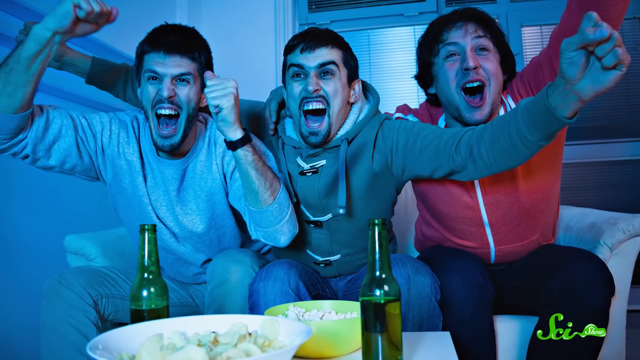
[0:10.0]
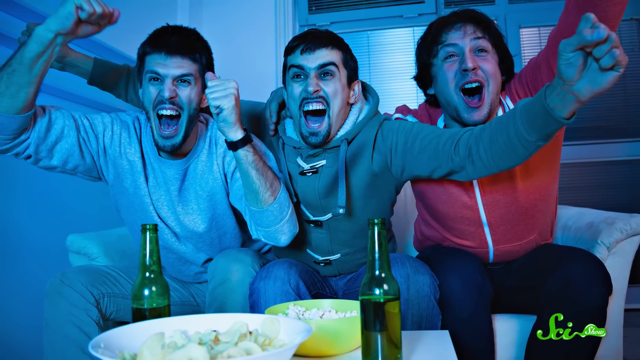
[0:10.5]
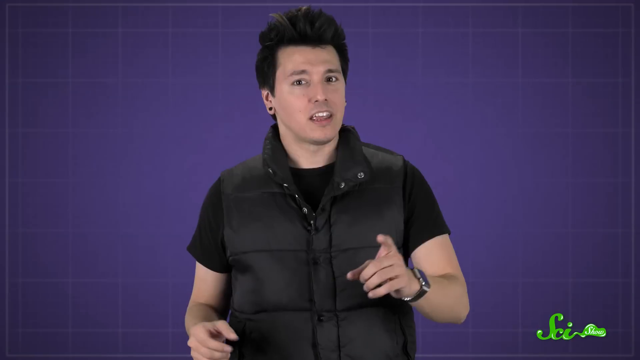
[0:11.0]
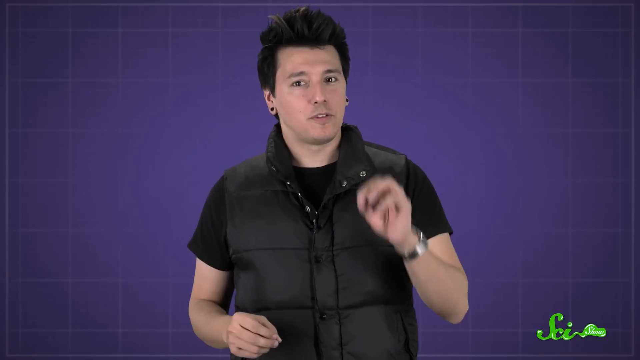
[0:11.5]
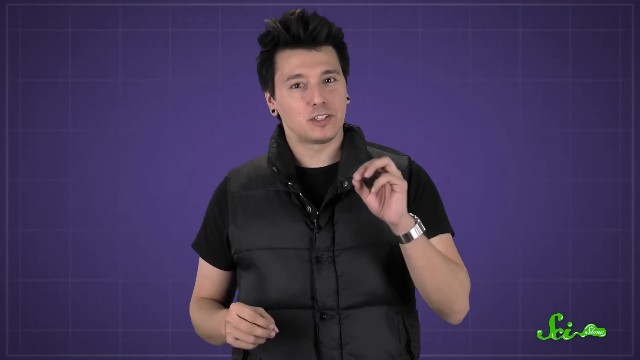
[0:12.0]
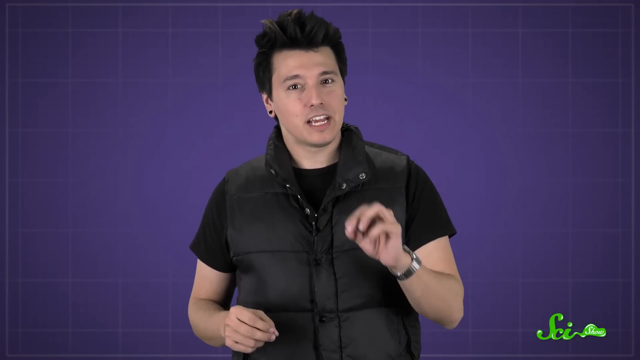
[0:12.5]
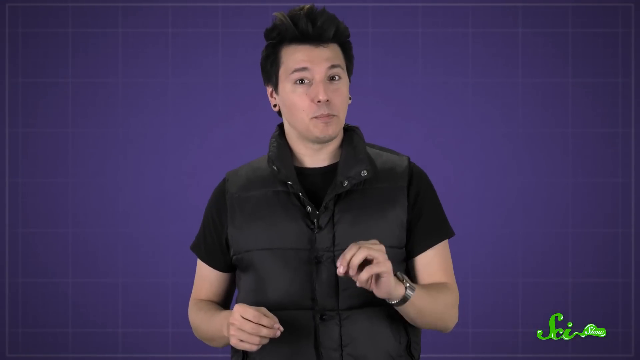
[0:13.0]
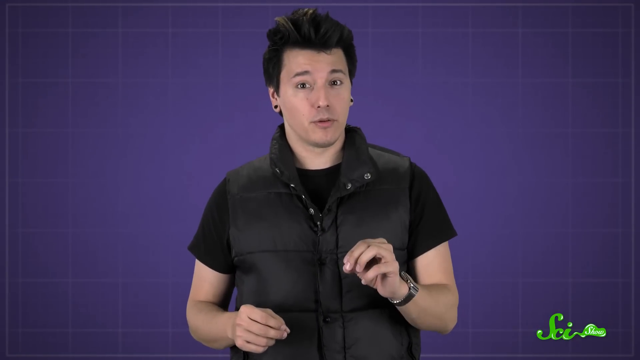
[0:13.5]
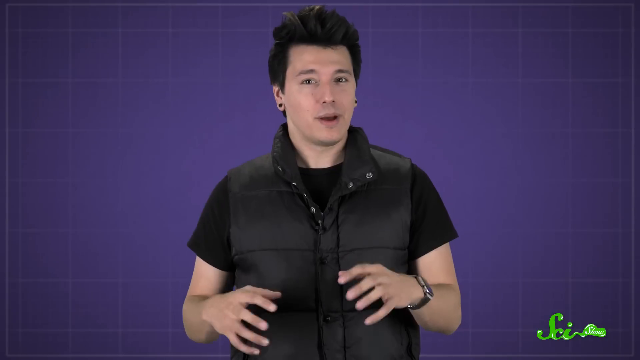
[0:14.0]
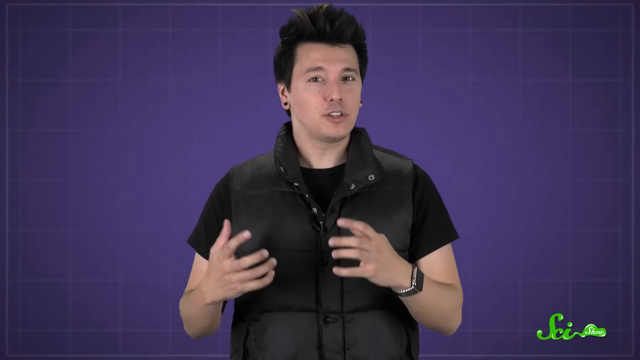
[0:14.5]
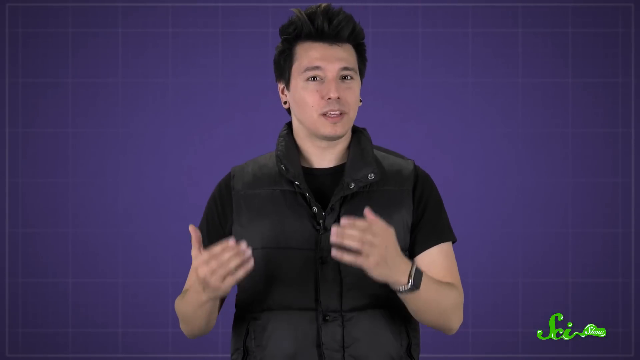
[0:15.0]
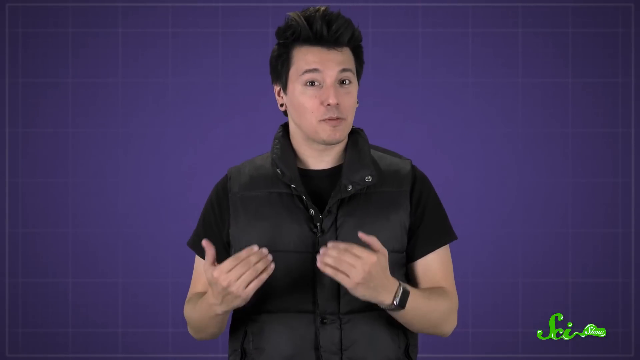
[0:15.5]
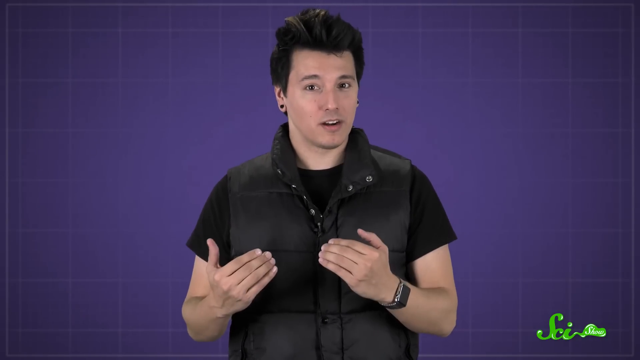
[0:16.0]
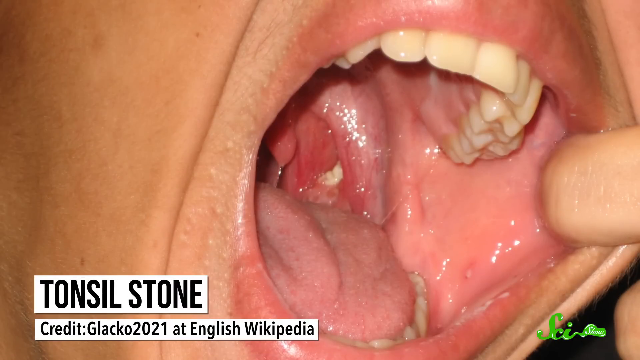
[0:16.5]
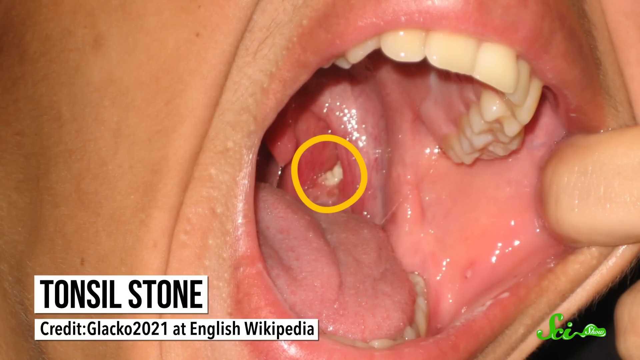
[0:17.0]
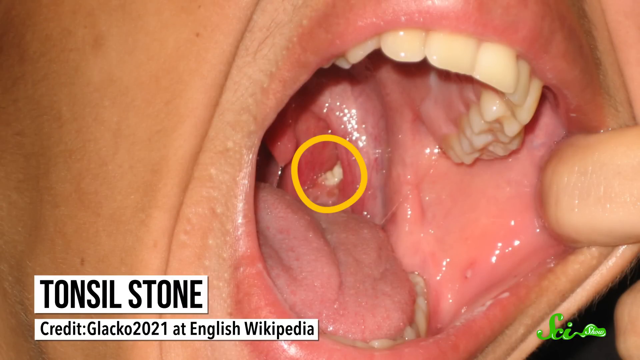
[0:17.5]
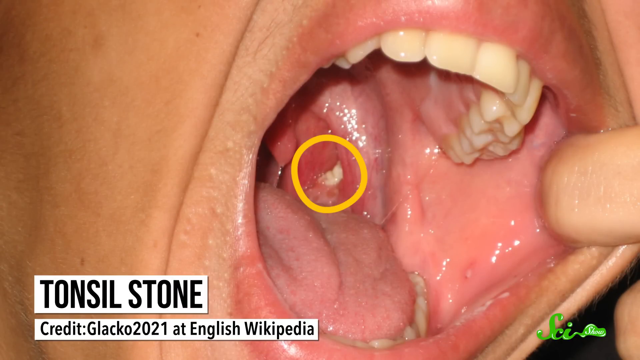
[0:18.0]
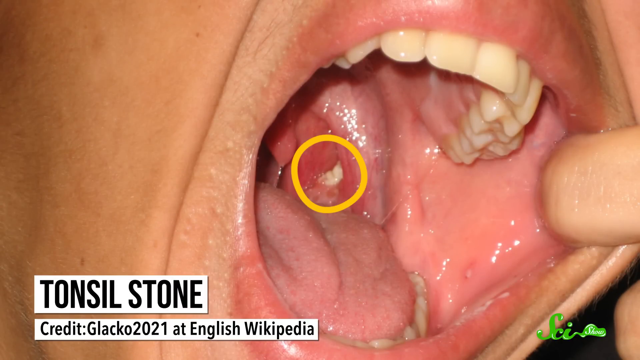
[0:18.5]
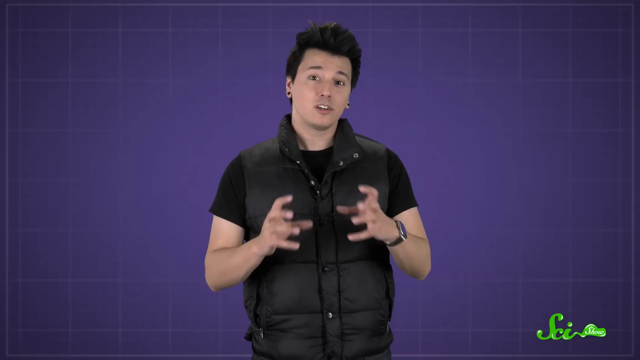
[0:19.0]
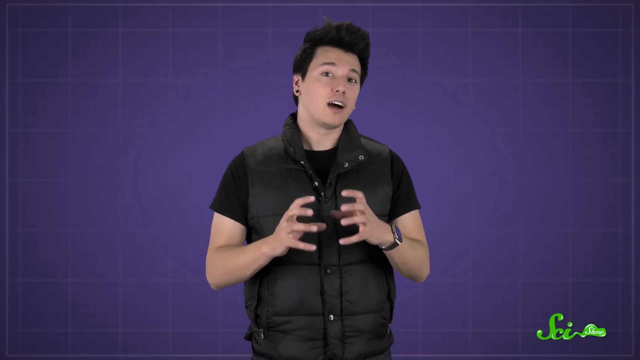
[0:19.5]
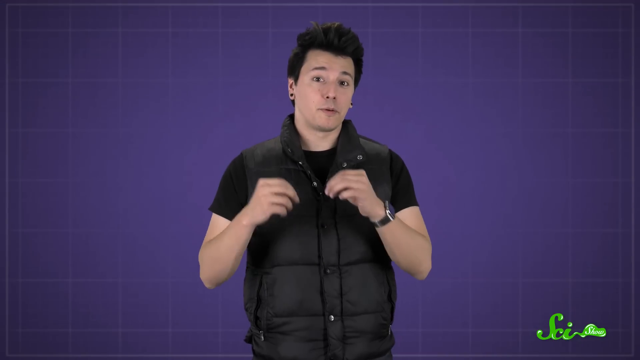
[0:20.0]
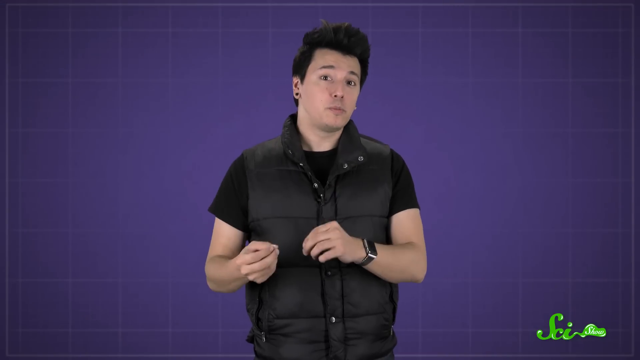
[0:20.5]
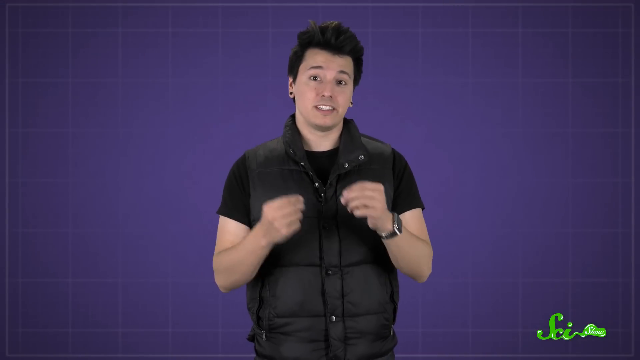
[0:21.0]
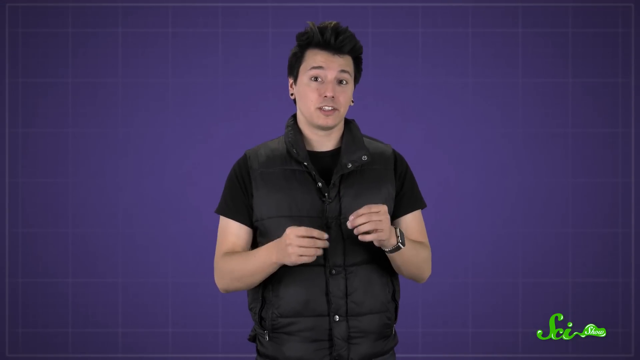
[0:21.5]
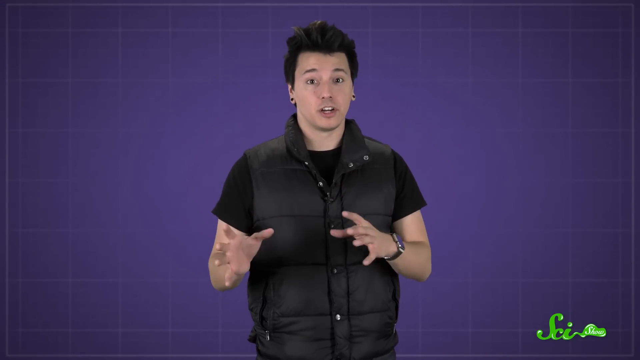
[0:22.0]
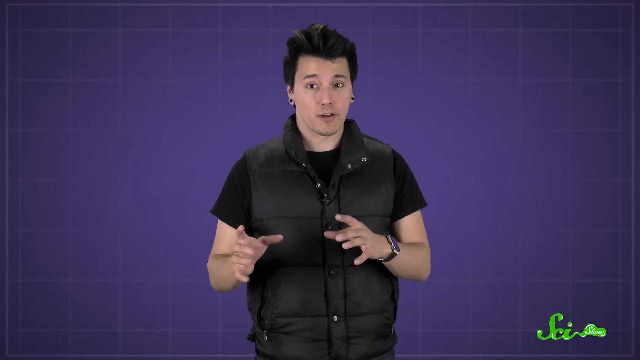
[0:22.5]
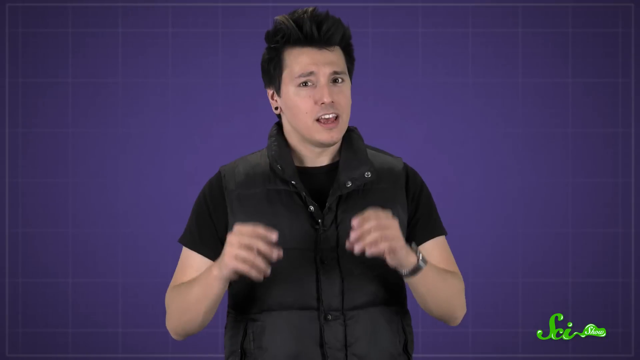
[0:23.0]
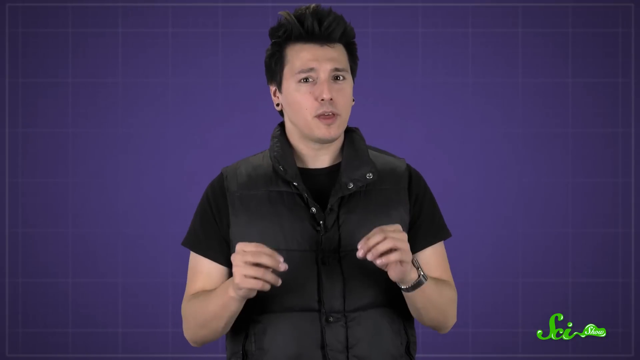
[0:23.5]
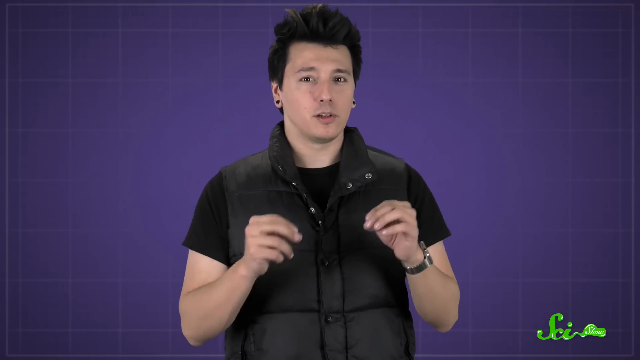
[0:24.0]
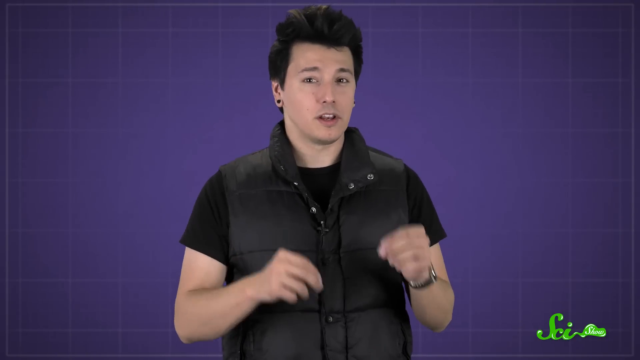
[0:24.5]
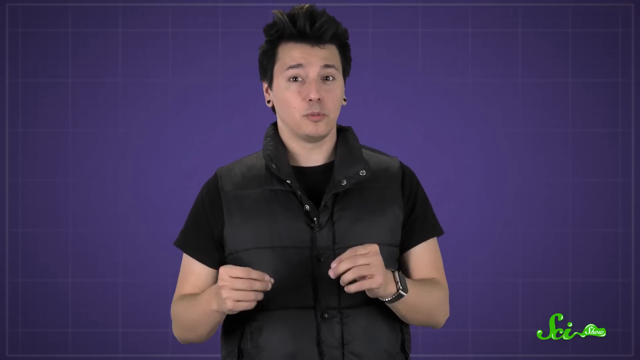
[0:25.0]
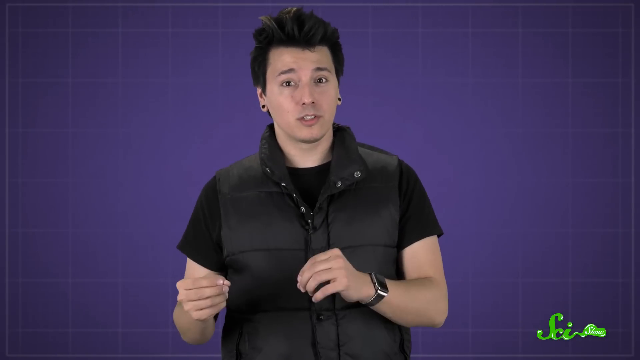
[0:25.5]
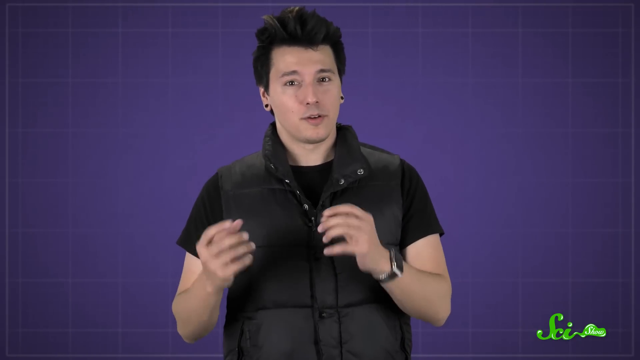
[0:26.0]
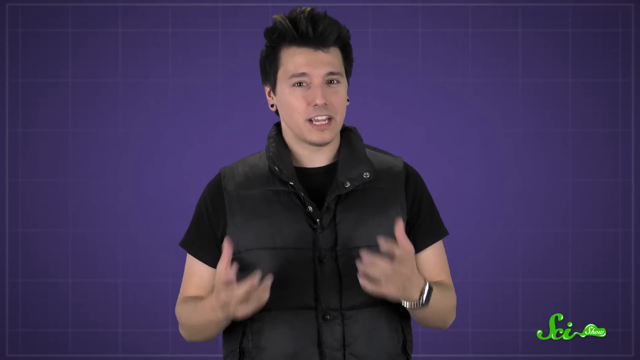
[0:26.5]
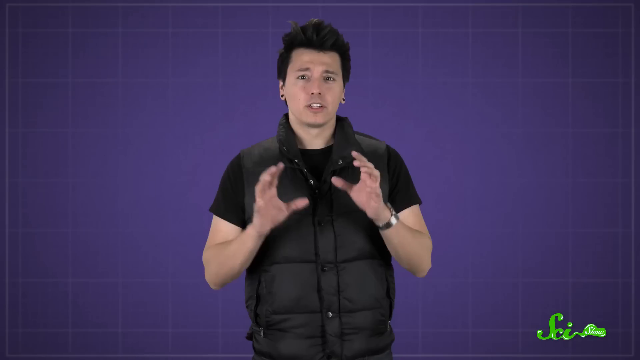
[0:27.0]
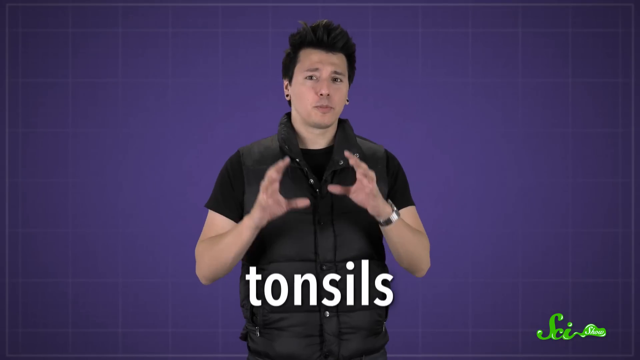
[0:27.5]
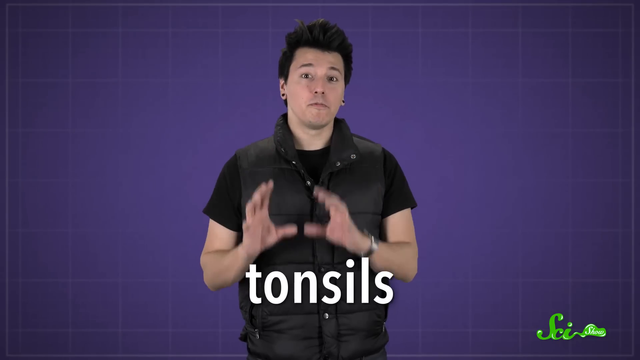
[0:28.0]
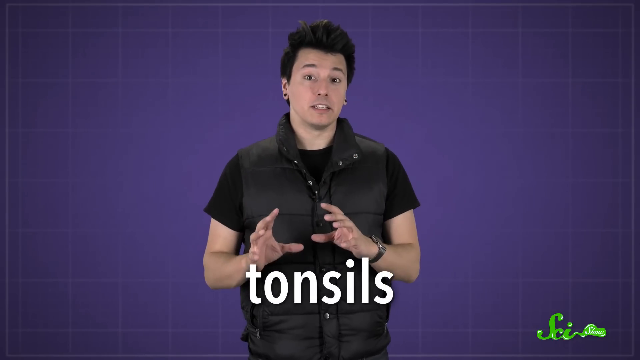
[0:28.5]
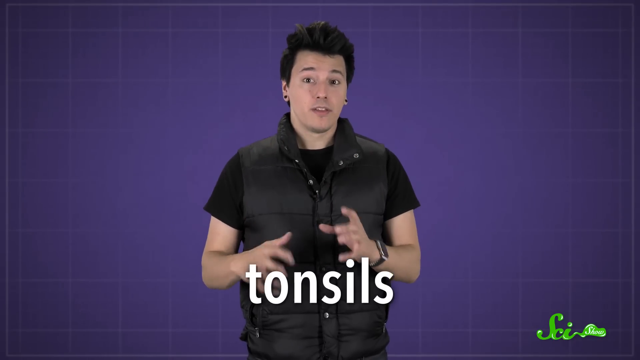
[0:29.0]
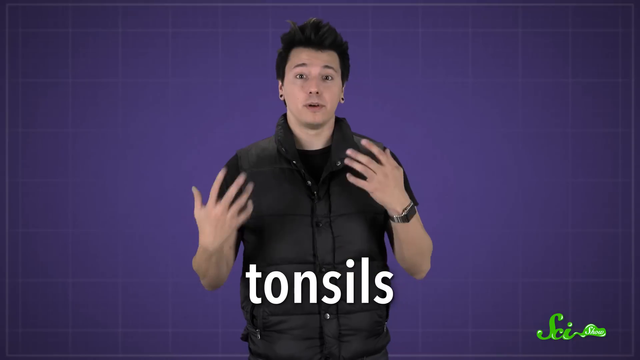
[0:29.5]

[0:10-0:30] A man talks directly to the audience in front of a dark purple background. The text "tonsil stone" appears, and a tonsil stone is shown circled in yellow. Many different people appear in the background looking very excited, as if watching their sports team win a game. The man is a Caucasian male wearing a black vest and a black t-shirt; he uses many hand gestures and speaks to the audience in a serious manner.